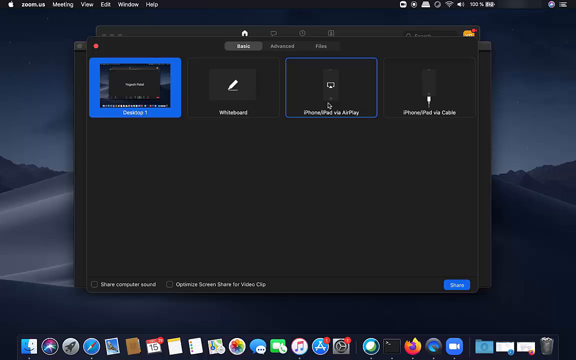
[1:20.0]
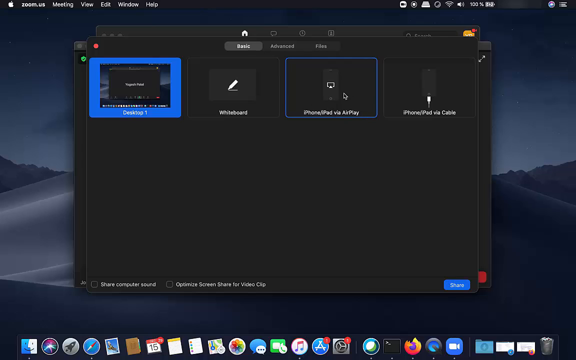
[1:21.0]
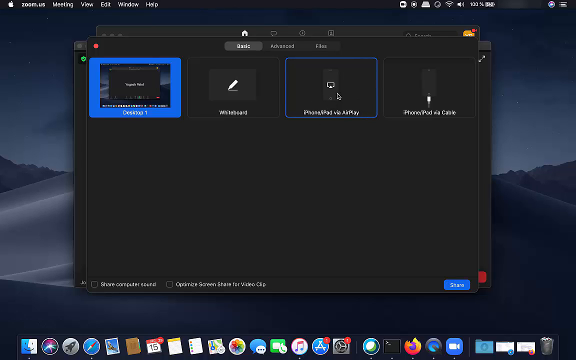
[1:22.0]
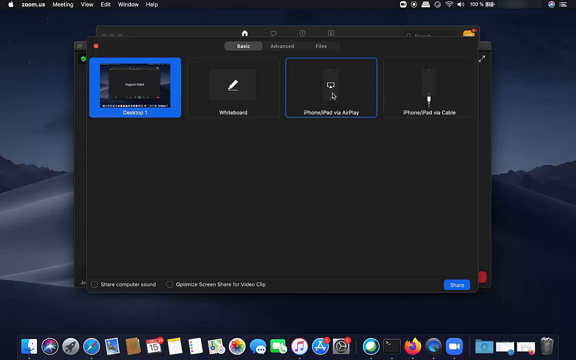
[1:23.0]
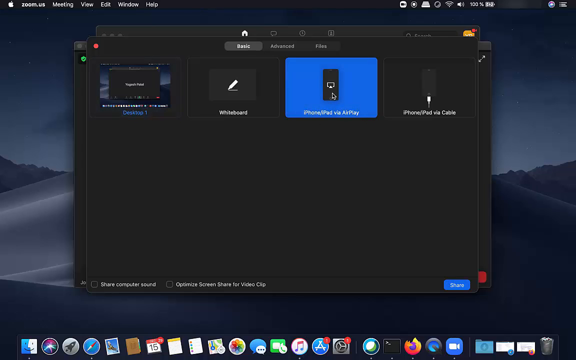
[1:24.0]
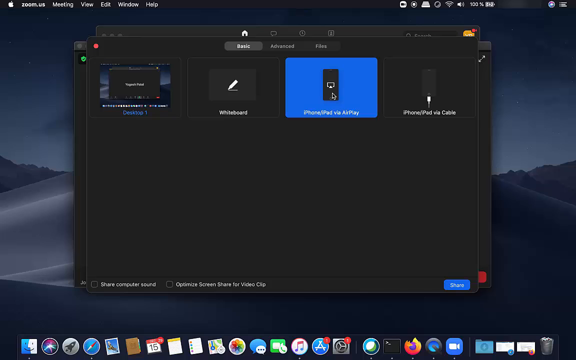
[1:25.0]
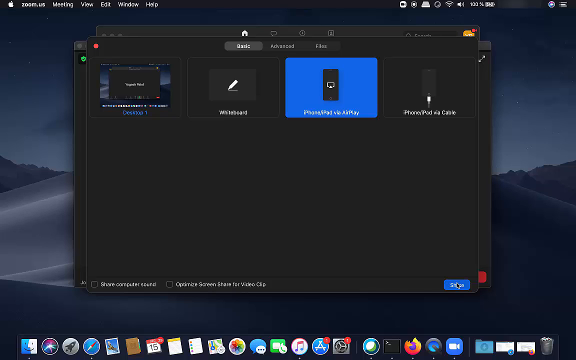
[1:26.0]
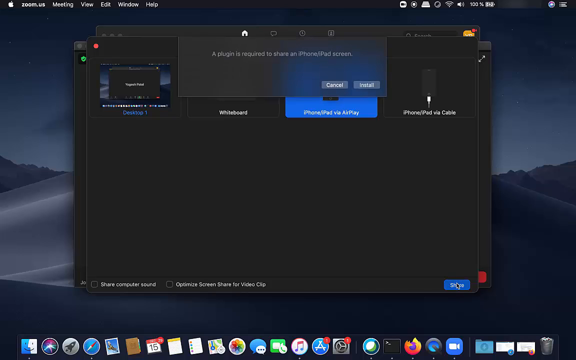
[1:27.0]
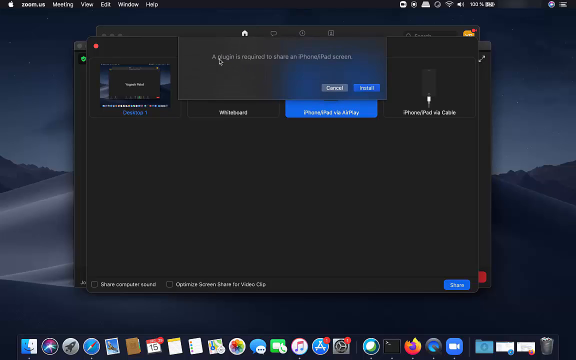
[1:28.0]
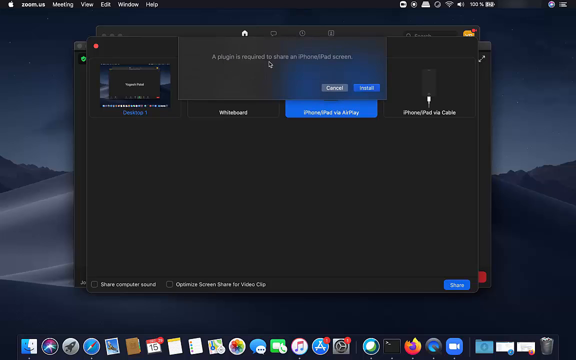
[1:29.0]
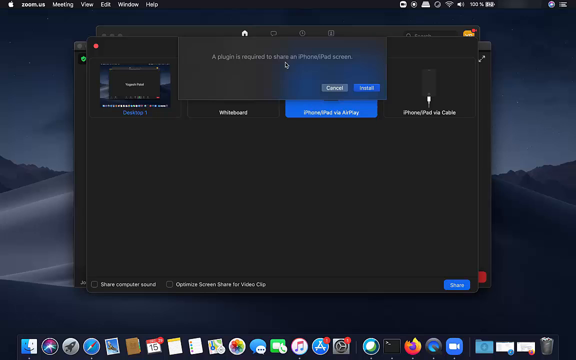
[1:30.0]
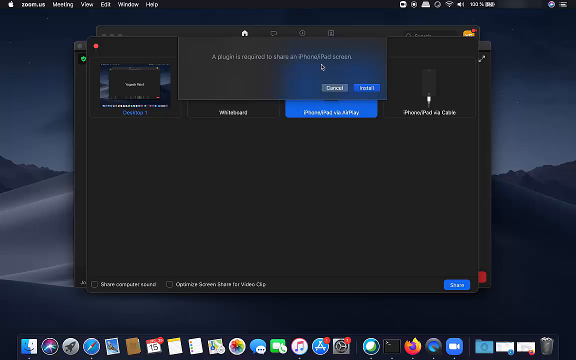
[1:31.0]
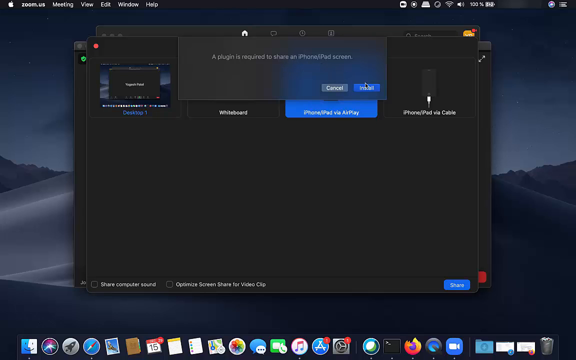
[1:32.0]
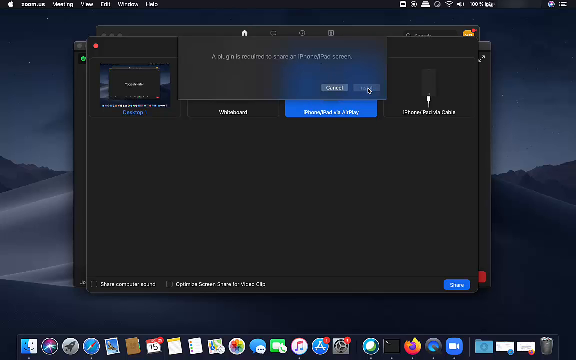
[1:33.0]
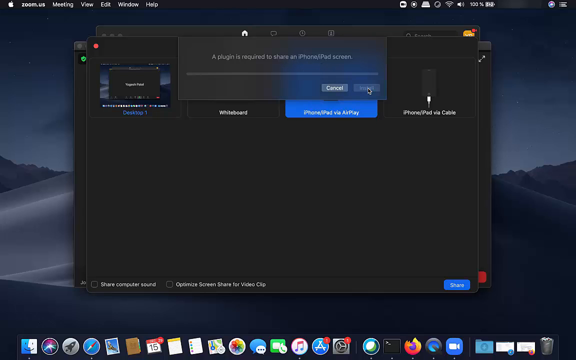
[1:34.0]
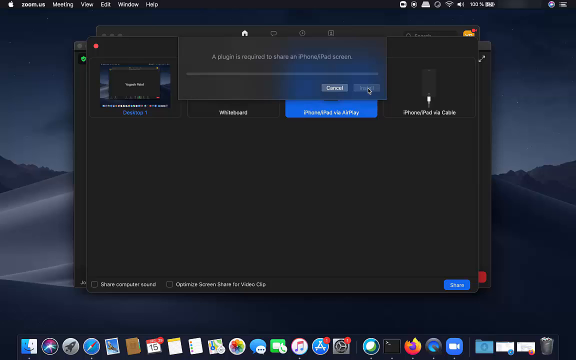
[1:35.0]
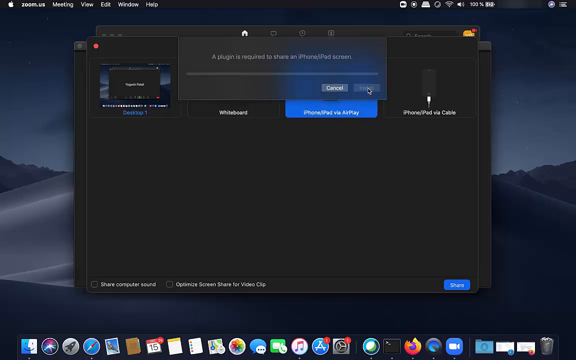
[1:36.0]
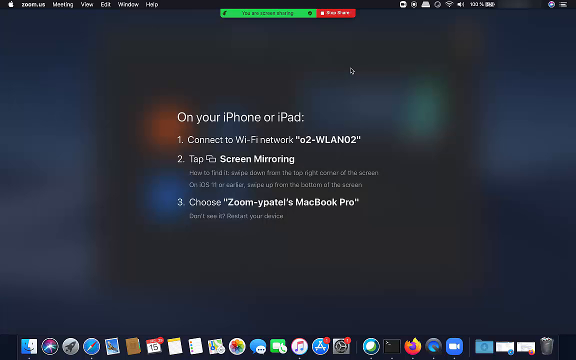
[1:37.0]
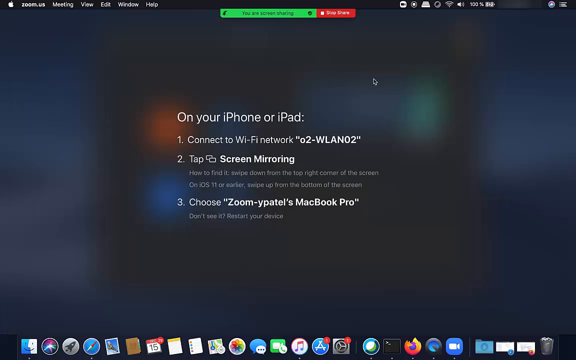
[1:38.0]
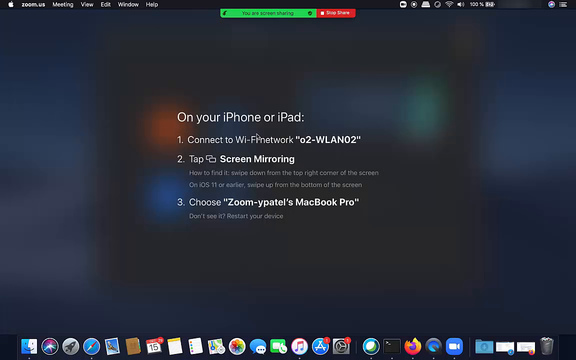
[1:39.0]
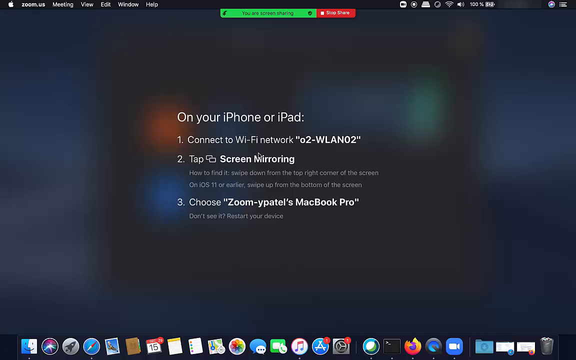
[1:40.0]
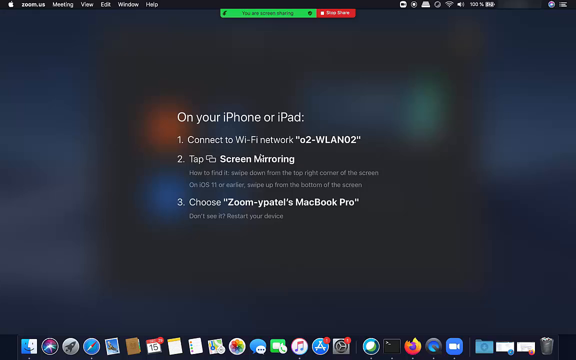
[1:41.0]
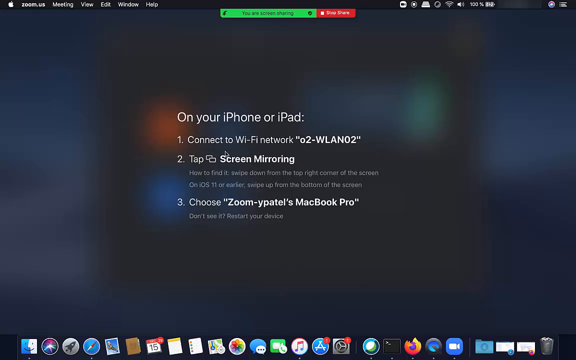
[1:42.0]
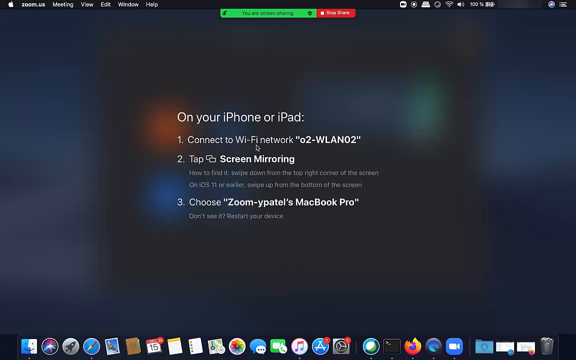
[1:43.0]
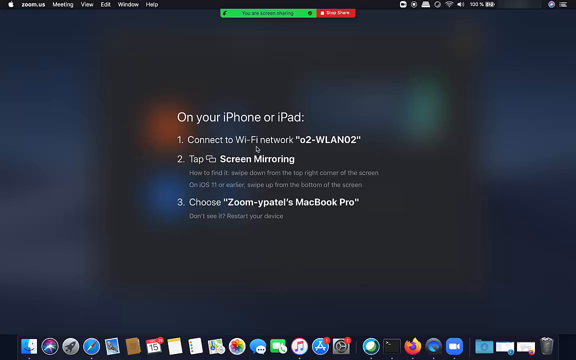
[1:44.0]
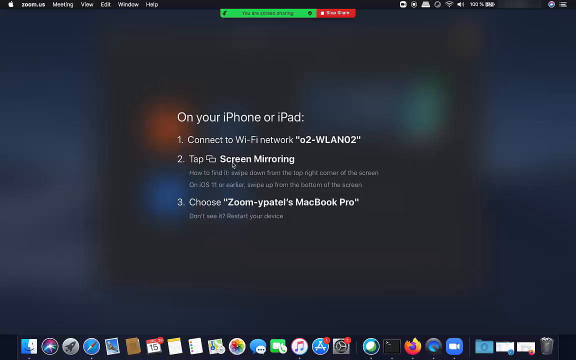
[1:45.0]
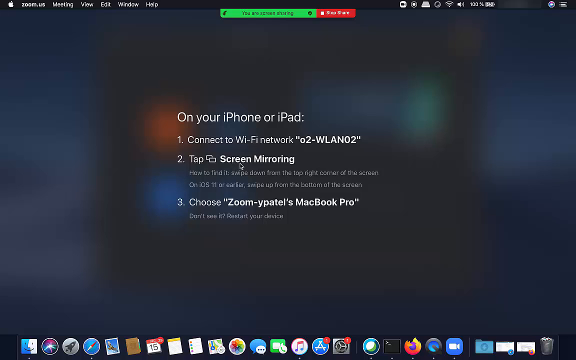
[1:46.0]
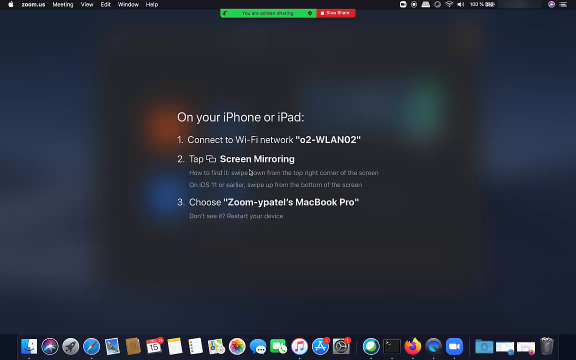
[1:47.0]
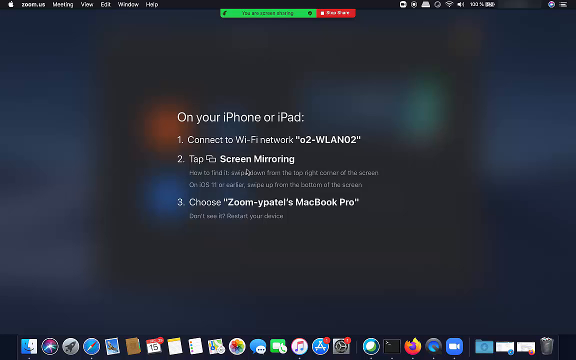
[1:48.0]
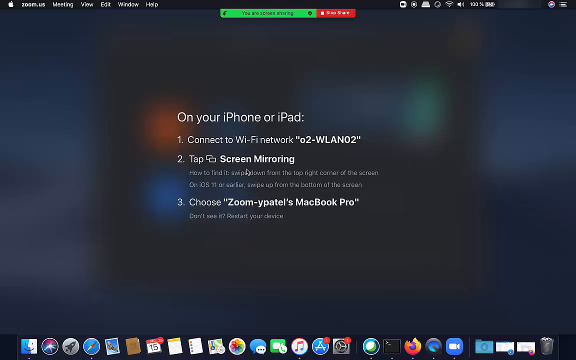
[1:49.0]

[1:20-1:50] On a computer screen, the cursor moves and highlights a box second from the right at the top of the screen. Another pop-up box appears, and the cursor cancels it so that it disappears. Next a sign appears that says "on your iPhone or iPad, connect to Wi-Fi network". The cursor connects to the network. The pop-up has a blue border around the first selection and a light blue outline around the third selection, and is completely black apart from the highlighted boxes. Selections of symbols are visible at the top of the screen. Another pop-up page is behind this page, and behind that is the screensaver, a nighttime picture of a sandy mountain. At the top of the screen are symbols of choices that can be clicked, as on a common computer screen.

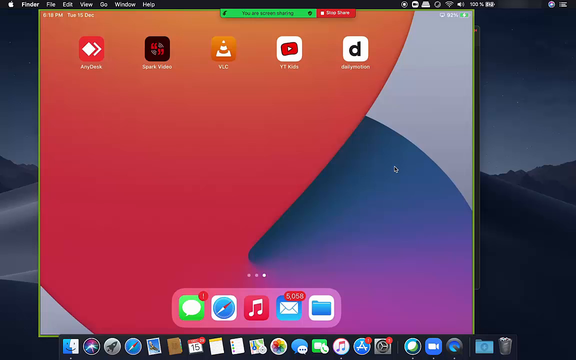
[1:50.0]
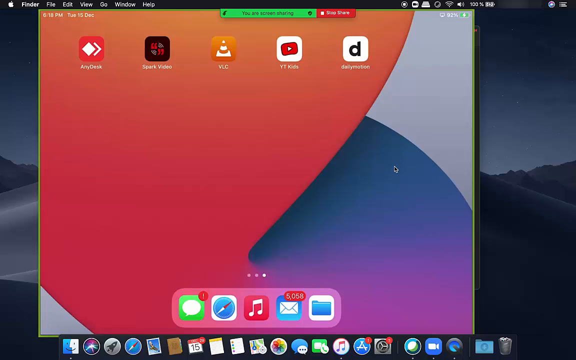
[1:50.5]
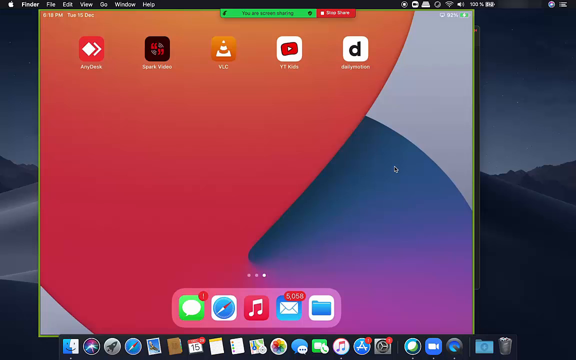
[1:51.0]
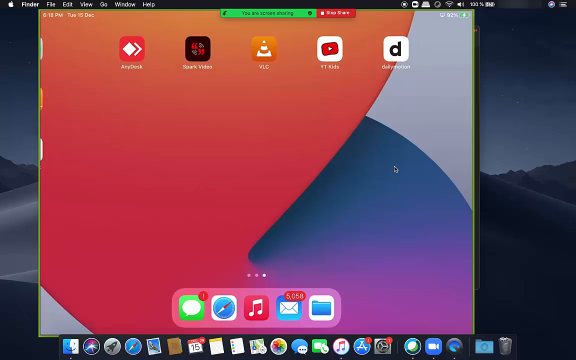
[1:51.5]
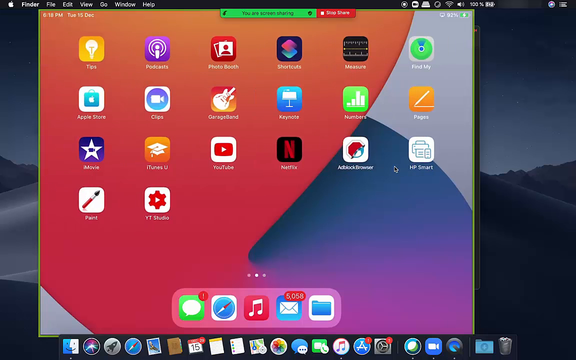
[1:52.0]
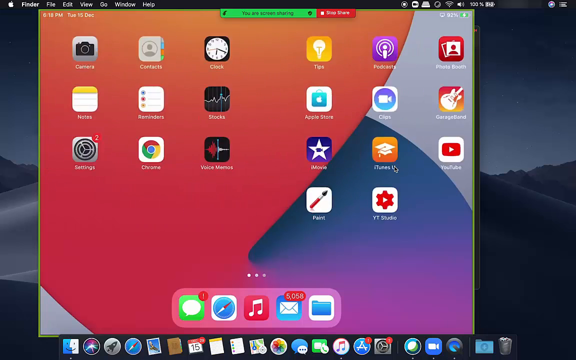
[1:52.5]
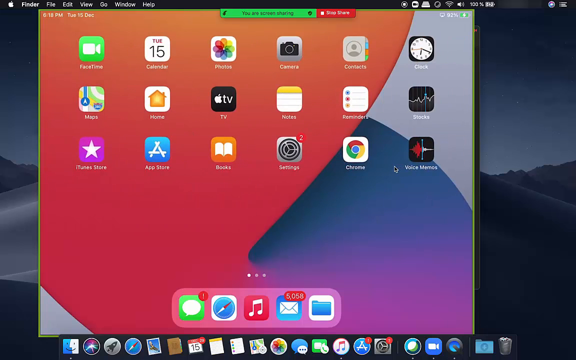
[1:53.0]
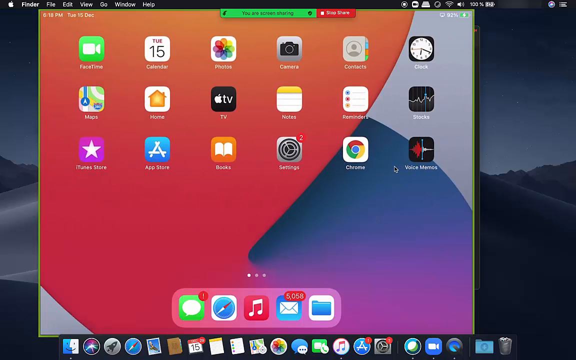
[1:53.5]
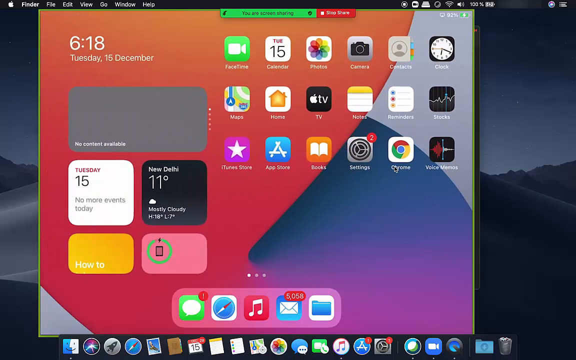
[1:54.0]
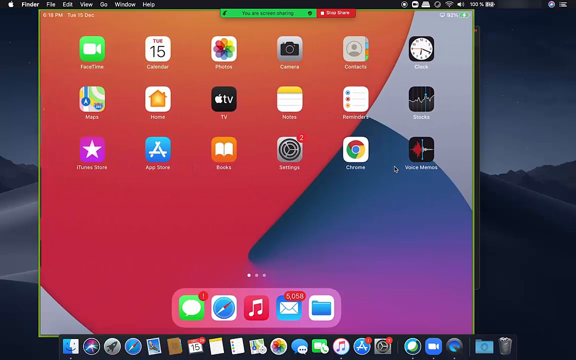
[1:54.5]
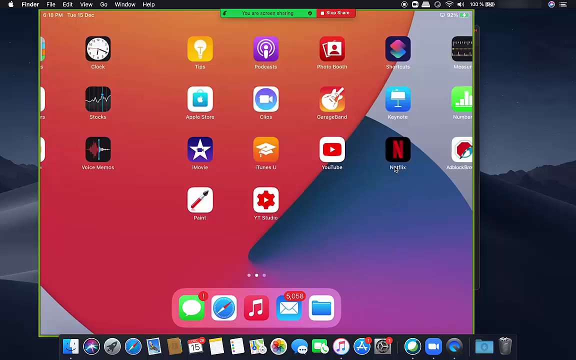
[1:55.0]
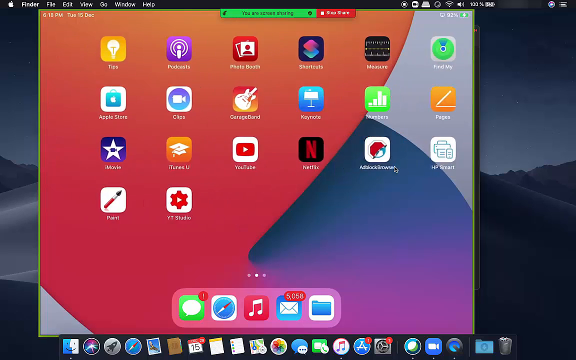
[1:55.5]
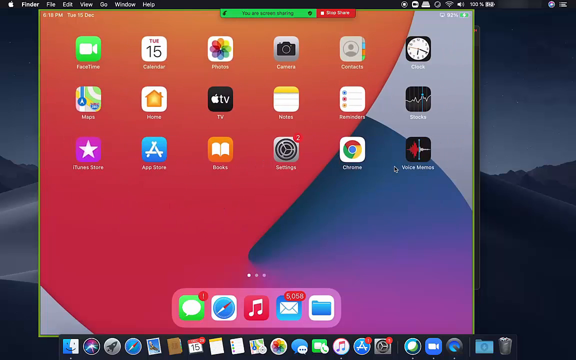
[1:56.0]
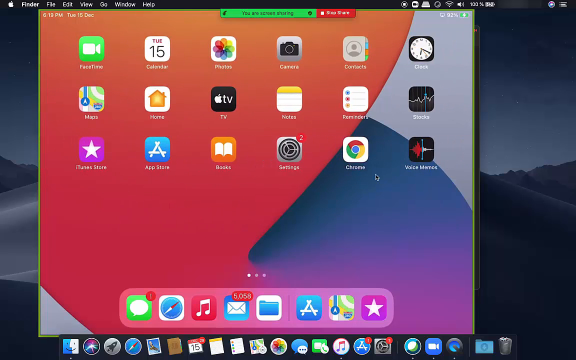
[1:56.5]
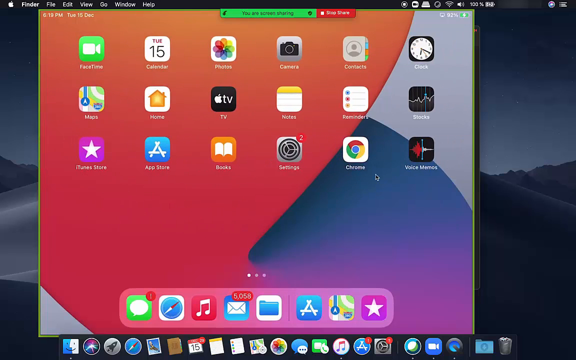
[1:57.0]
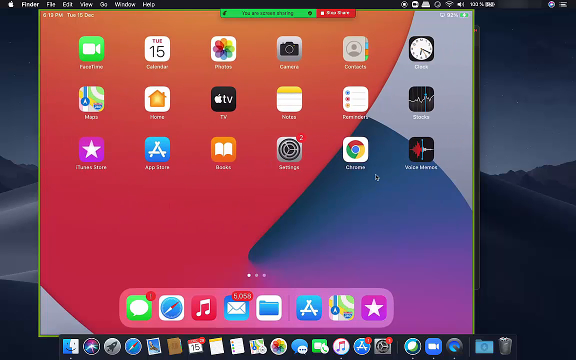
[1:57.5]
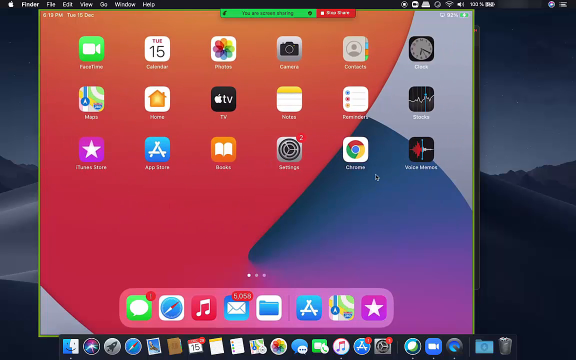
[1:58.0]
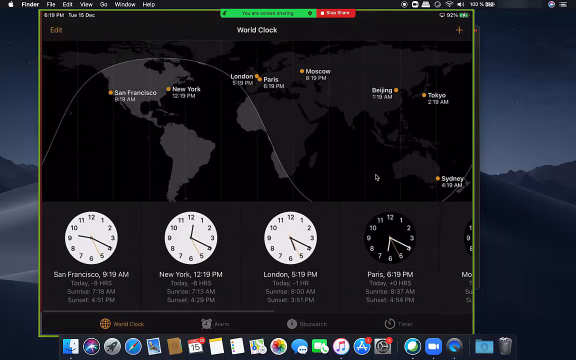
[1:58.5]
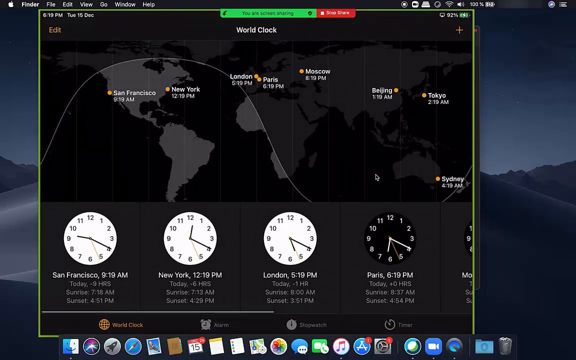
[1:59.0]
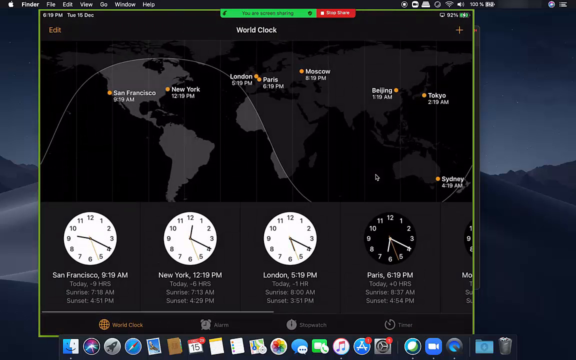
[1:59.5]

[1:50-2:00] On a computer screen, icons slide to the left and to the right. The person controlling the cursor clicks the world clock, and a pop-up appears and then disappears. Common icons found on computers and phones are visible, such as app stores and photos. When the world clock appears, it pictures many clocks for different destinations, including ones overseas and one in the US. When it disappears, a very multicolored screen appears with five icons across the top. Along the bottom are standard icons such as text messages, Safari, Apple Music, email, and a blue box with a white background. These icons are also on the computer screen. Behind them is the screensaver with a picture of a very smooth mountain made of sand.